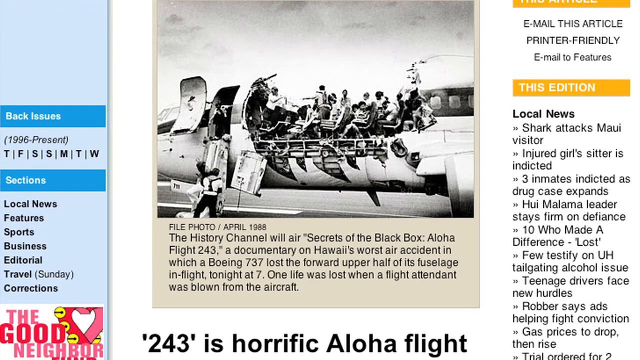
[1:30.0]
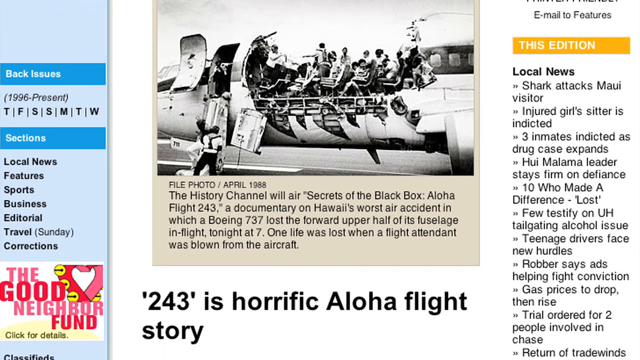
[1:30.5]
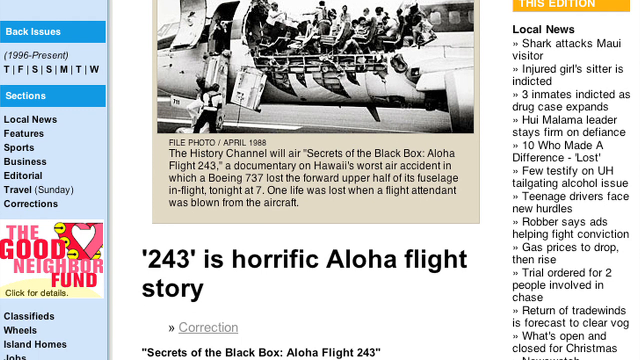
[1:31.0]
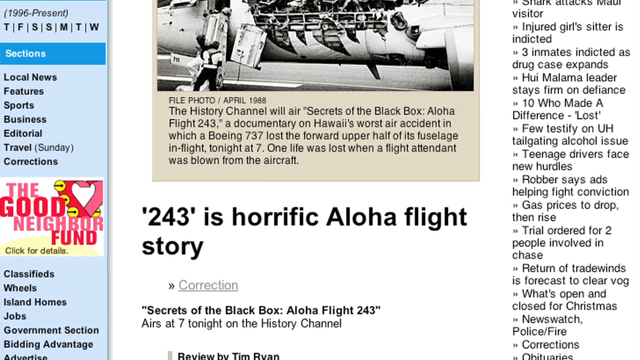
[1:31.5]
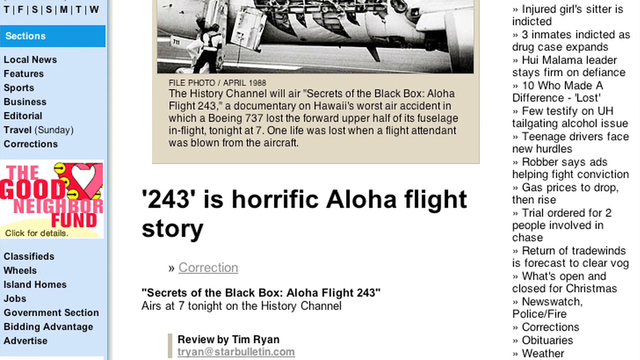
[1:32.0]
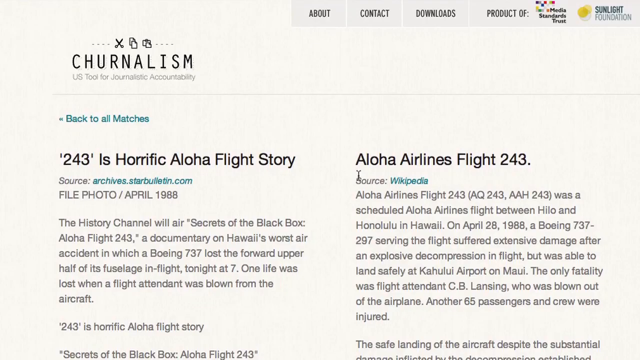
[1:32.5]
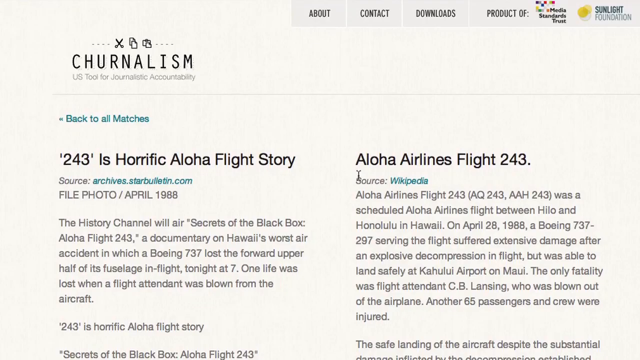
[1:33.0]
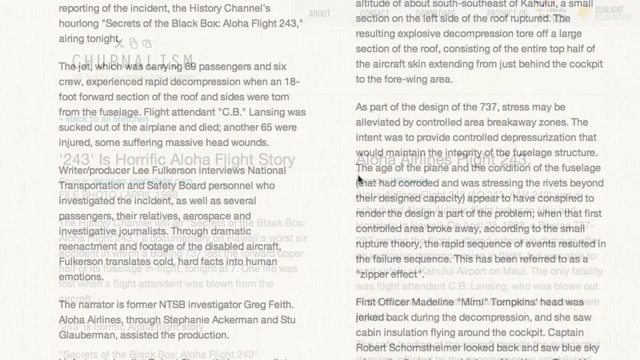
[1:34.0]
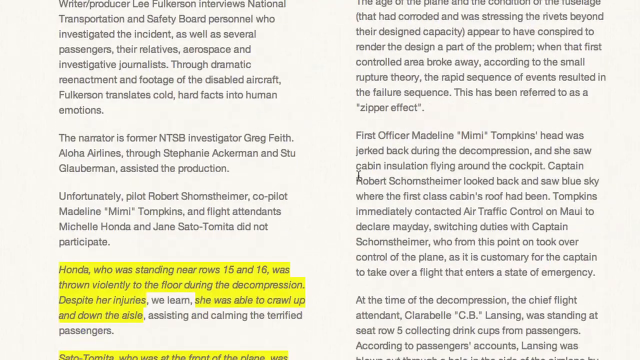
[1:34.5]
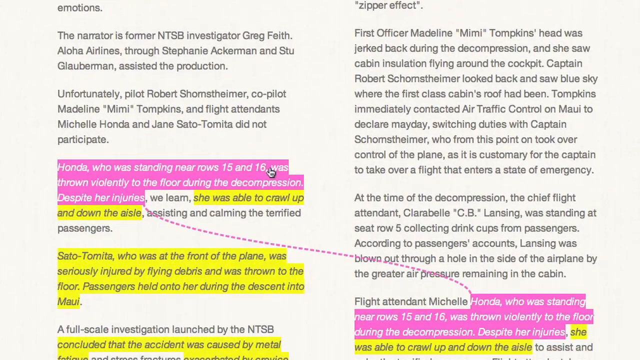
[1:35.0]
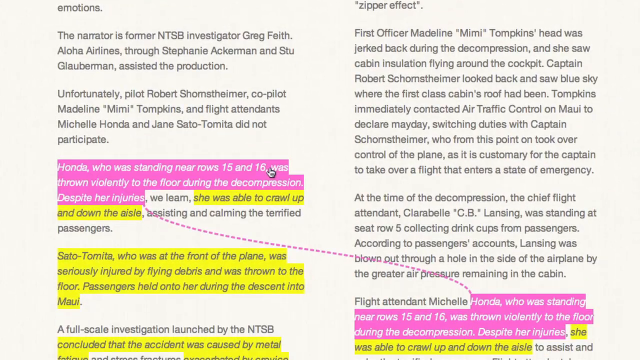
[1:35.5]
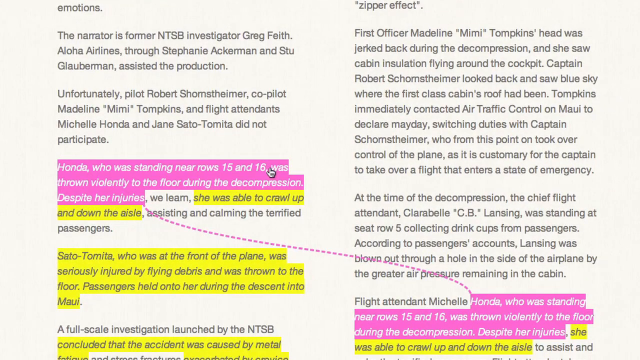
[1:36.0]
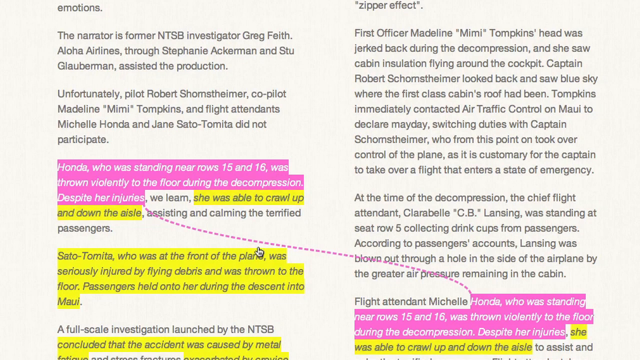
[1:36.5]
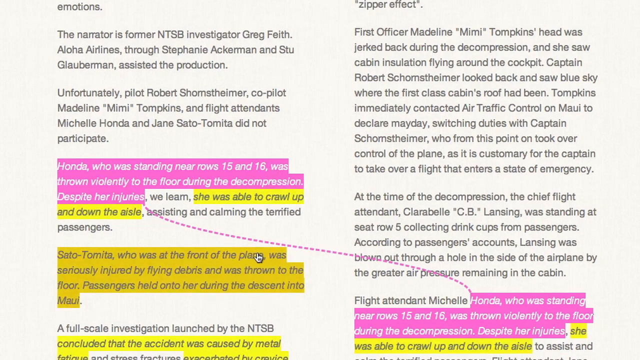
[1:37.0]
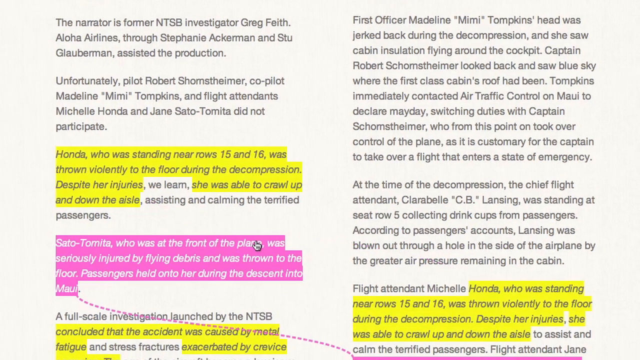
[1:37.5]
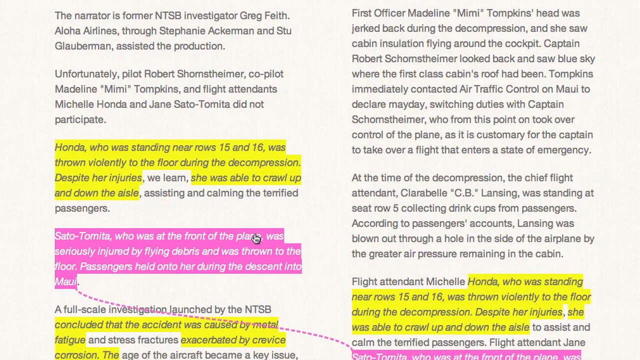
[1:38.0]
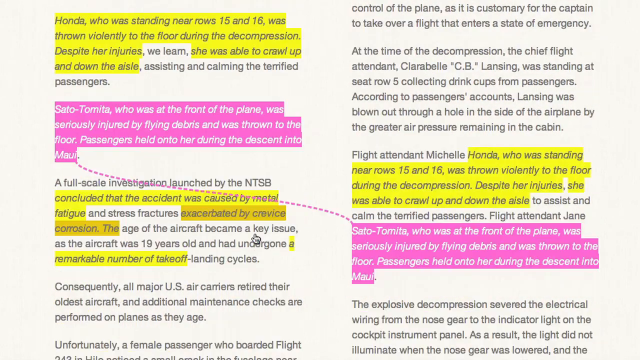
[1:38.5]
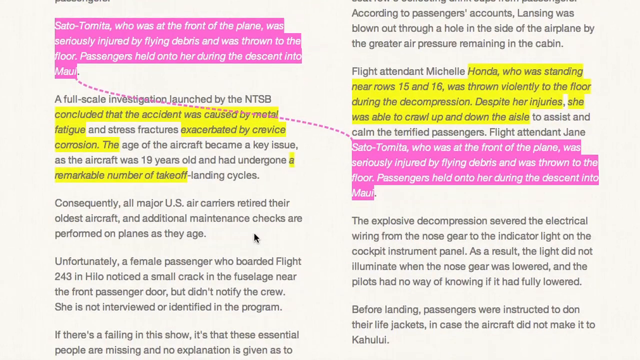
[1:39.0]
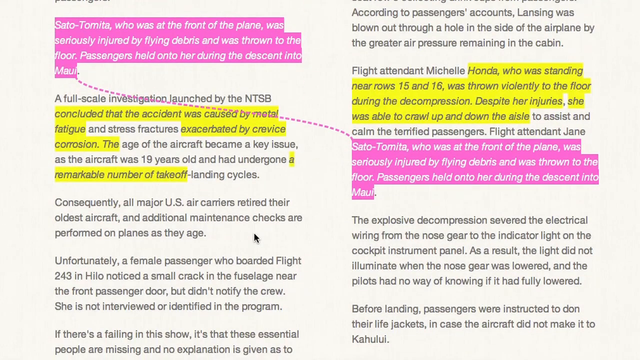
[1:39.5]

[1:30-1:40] The Star Bulletin homepage shows a picture that looks older, with "April 1988" below it. It is a photo of a damaged plane that looks like a passenger plane; it is unclear whether there are people in it. The text says "the History Channel will air Secrets of the Black Box, Aloha Flight 243, a documentary on Hawaii's worst air accident in which a Boeing 737 lost the forward upper half of its fuselage in flight tonight at 7. One life was lost when a flight attendant was blown from the aircraft." More information follows in paragraphs. The view then moves to a different document to highlight information from different areas.